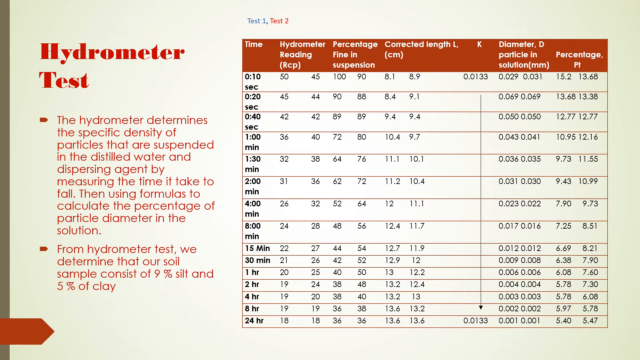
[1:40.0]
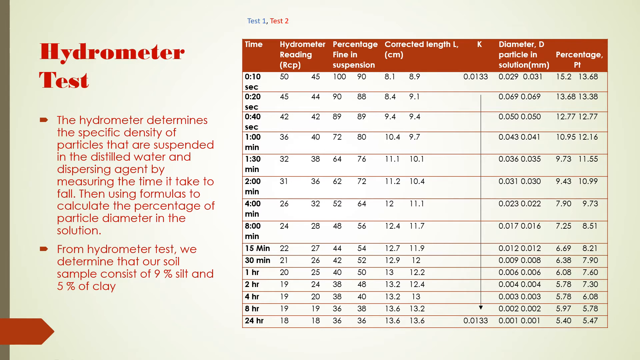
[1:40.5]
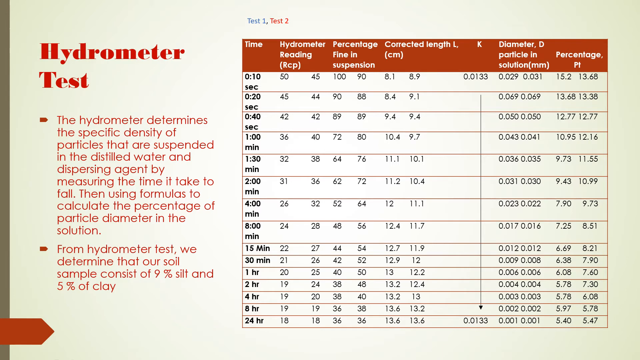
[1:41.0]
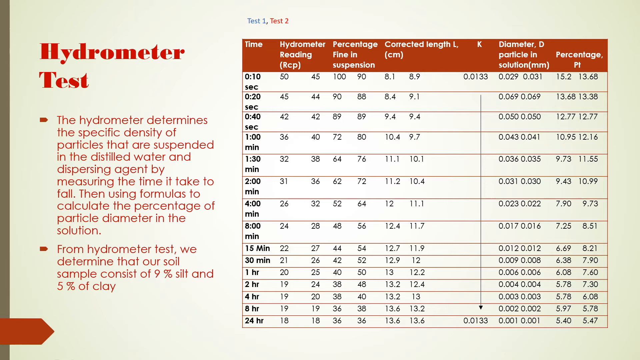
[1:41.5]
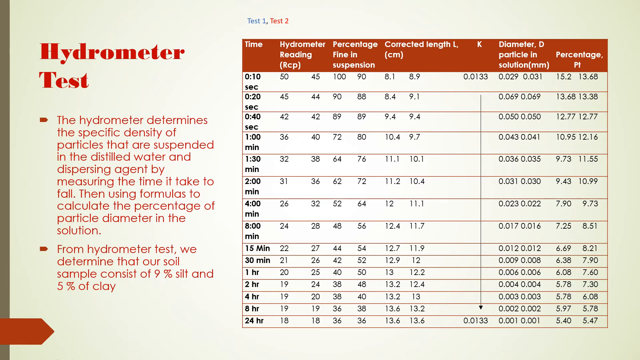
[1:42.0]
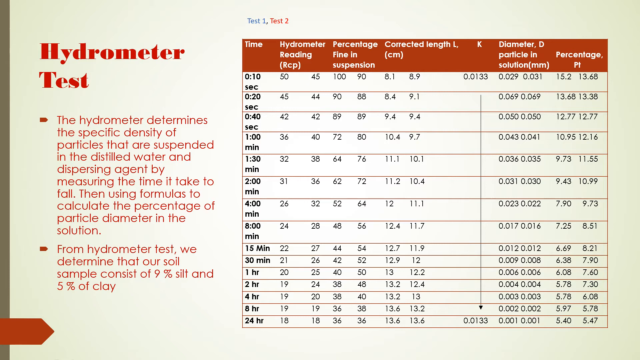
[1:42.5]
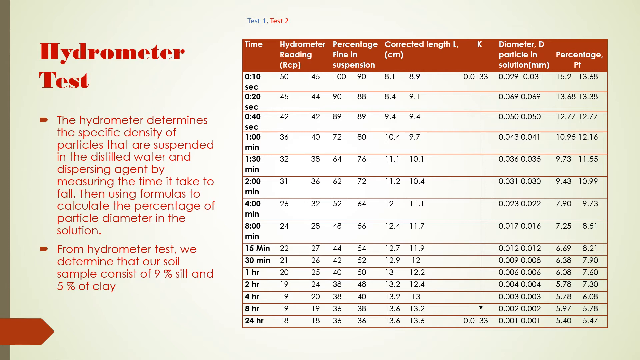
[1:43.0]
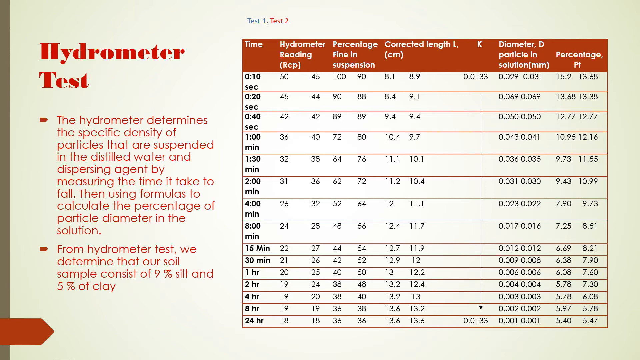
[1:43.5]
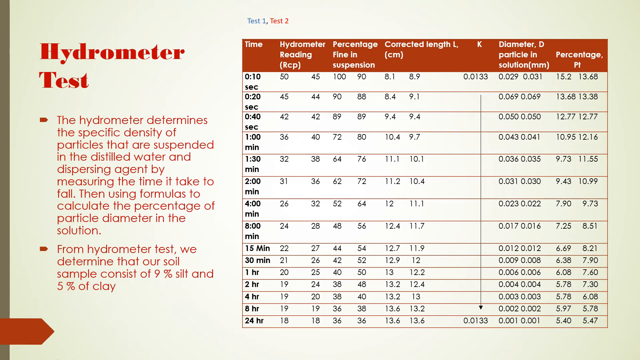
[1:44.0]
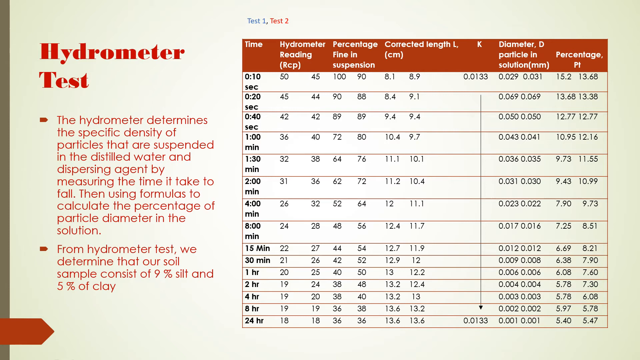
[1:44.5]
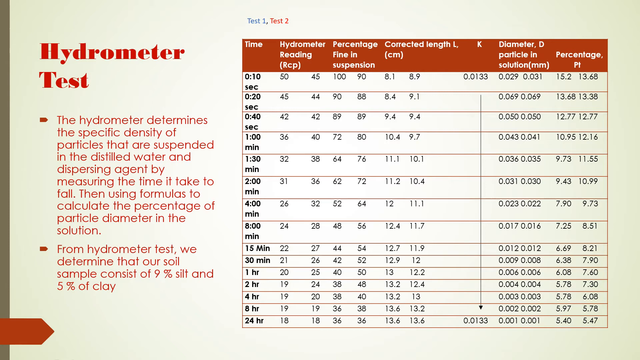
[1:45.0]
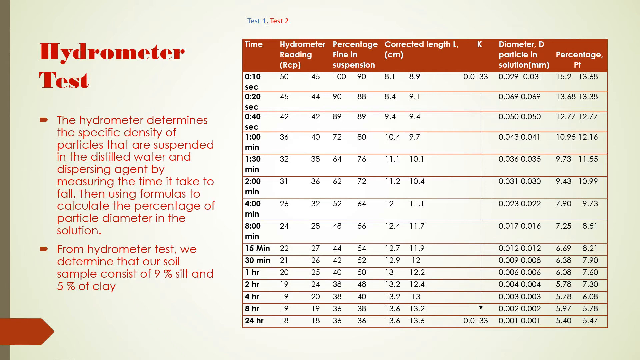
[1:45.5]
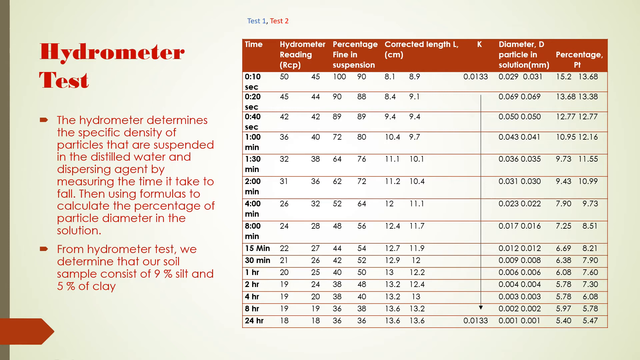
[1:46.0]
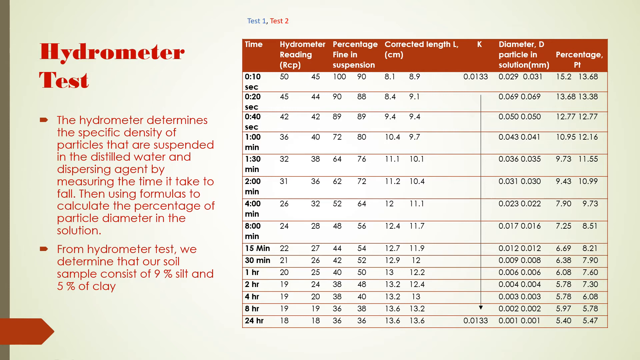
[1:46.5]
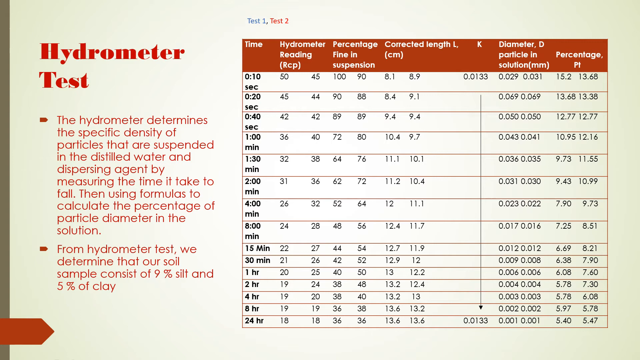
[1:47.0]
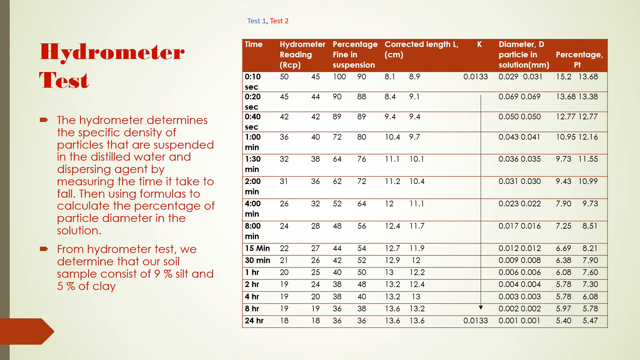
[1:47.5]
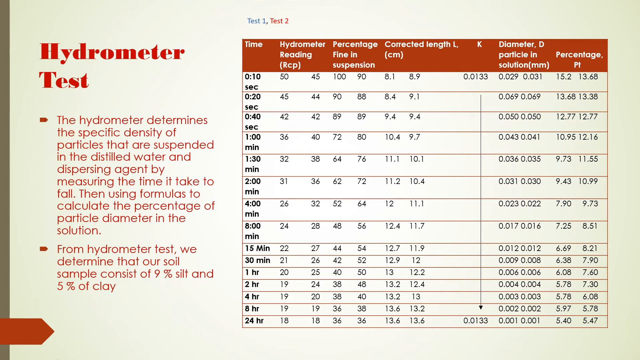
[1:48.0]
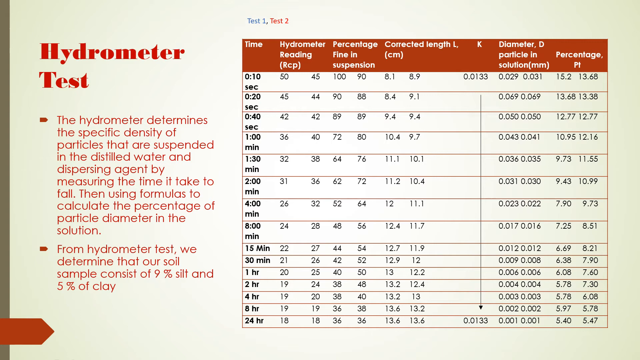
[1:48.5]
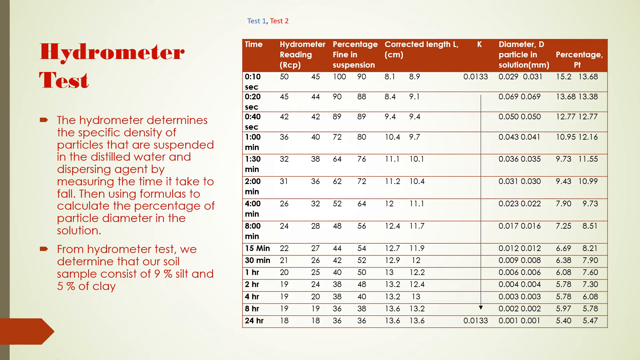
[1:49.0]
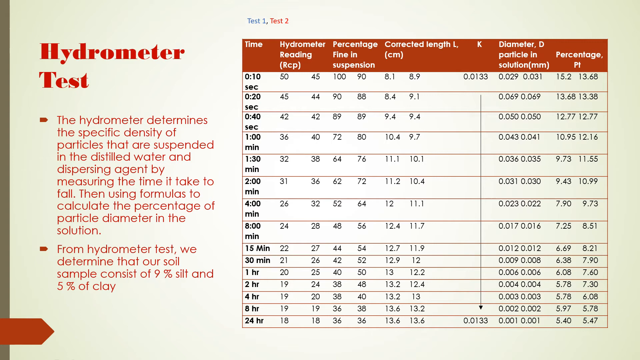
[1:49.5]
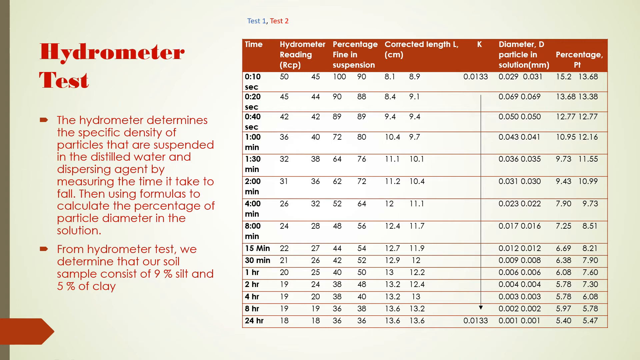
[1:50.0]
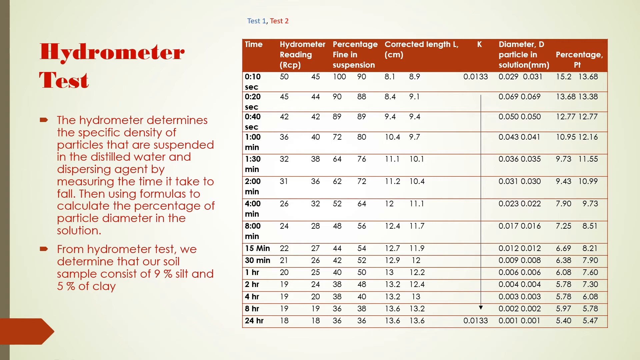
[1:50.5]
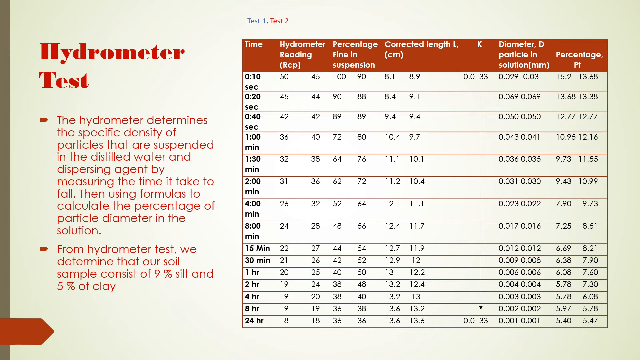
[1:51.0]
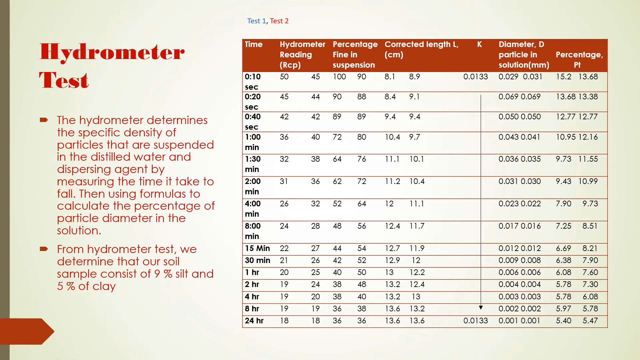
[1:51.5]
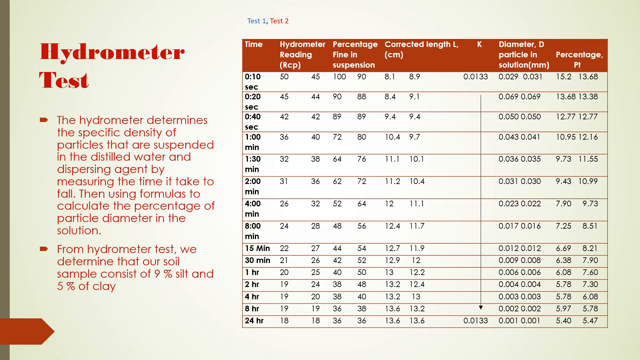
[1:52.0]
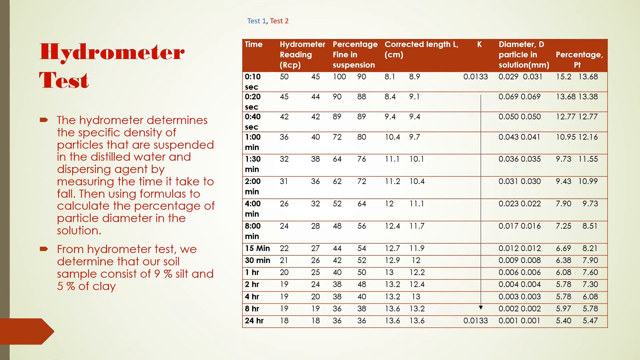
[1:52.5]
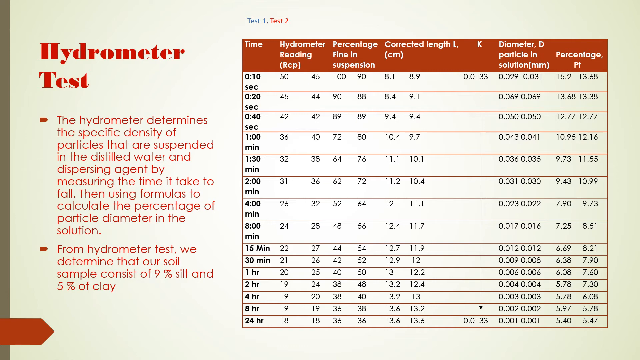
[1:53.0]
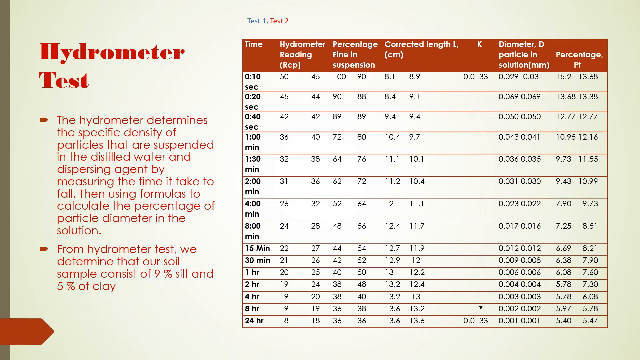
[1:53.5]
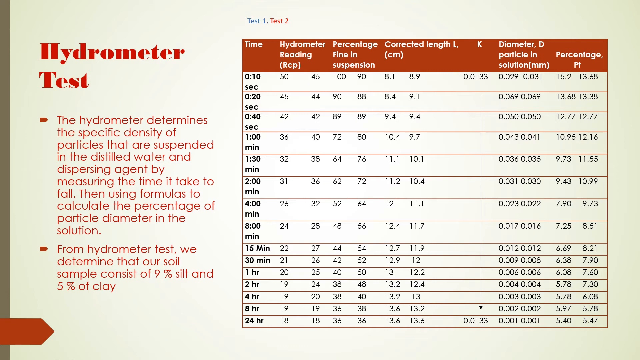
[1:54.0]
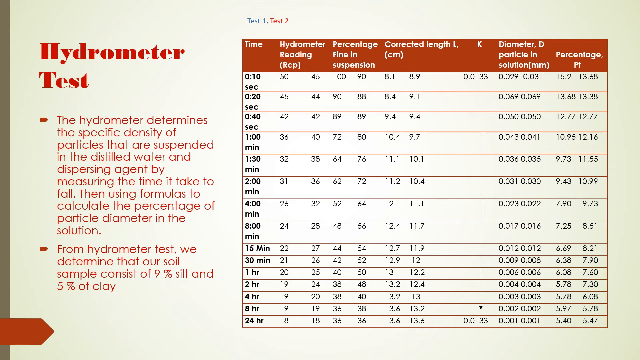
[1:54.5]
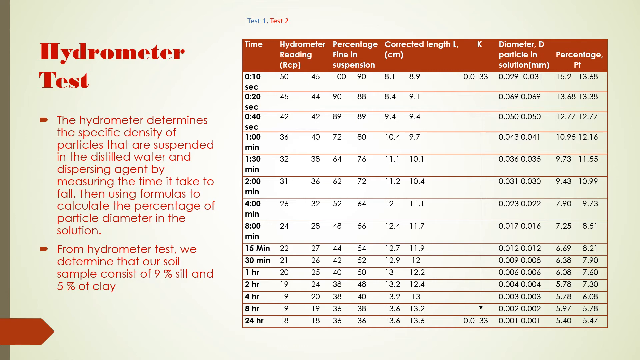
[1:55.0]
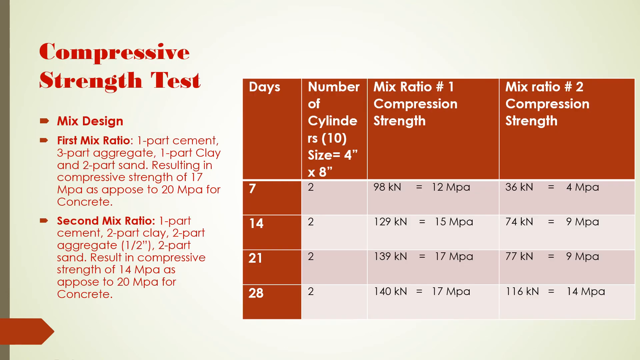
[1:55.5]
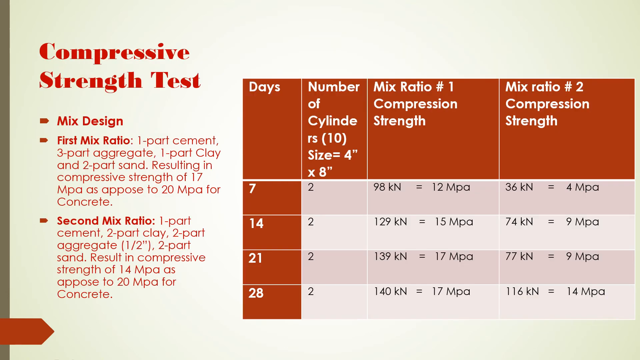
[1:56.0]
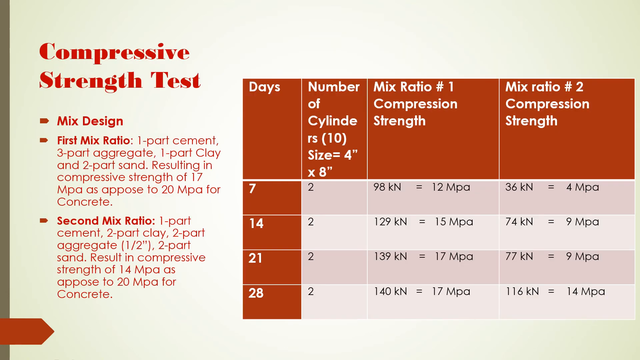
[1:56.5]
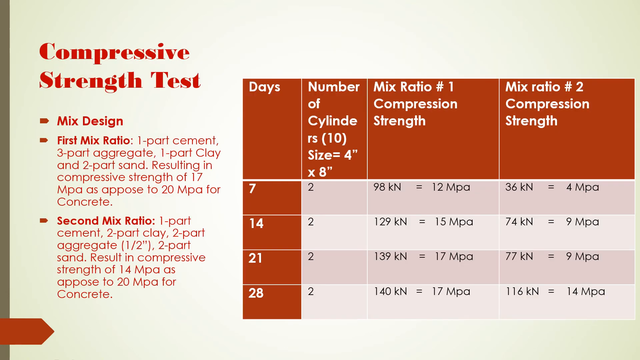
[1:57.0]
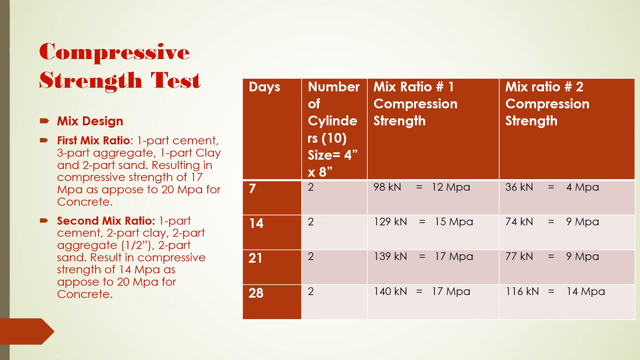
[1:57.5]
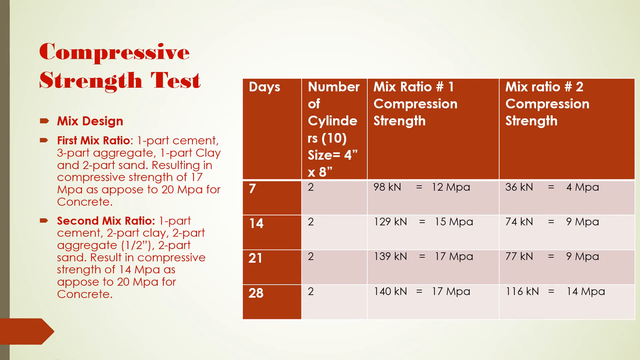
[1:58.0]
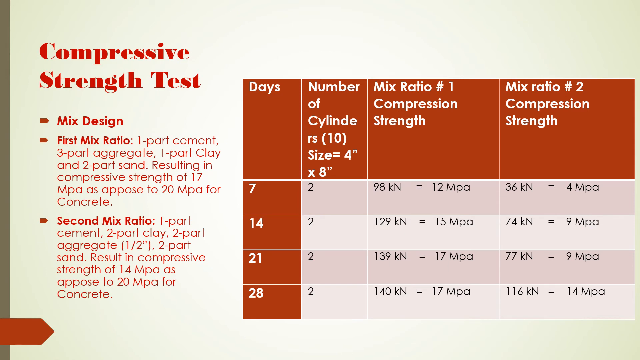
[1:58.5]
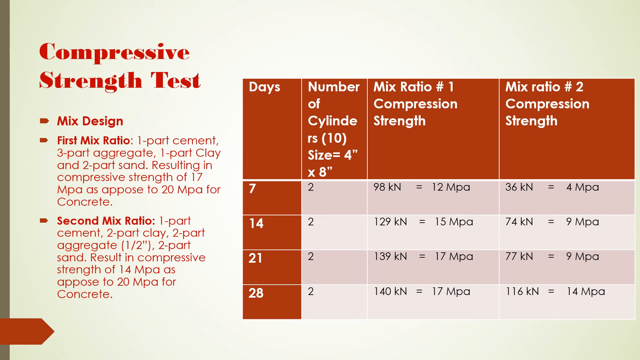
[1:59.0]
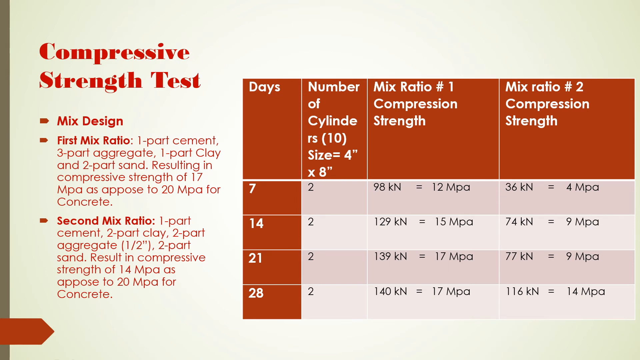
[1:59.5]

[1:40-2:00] The slide with "hydrometer test" at the top of the page has two bullet points on the left. The first reads "the hydrometer determines the specific density of particles that are suspended in the distilled water and dispersing agent by measuring the time it takes to fall," and the second reads "from hydrometer test we determine that our soil sample consists of 9% silt and 5% of clay." A table on the right-hand side shows this information. Next comes a slide titled "compressive strength test" with three bullet points. The first just says "mixed design" in bold red text. The second reads "first mix ratio, 1 part cement, 3 part aggregate, 1 part clay, and 2 part sand resulting in compressive strength of 17 MPa as opposed to 20 MPa for concrete." The third reads "second mix ratio, 1 part cement, 2 part clay, 2 part aggregate, 1 part sand resulting in compressive strength of 14 MPa as opposed to 20 MPa for concrete." A small chart is on the right of the slide.